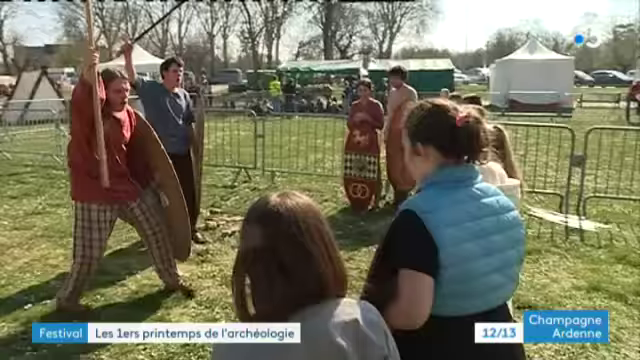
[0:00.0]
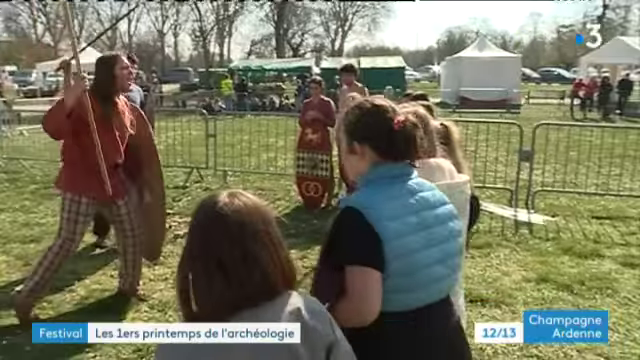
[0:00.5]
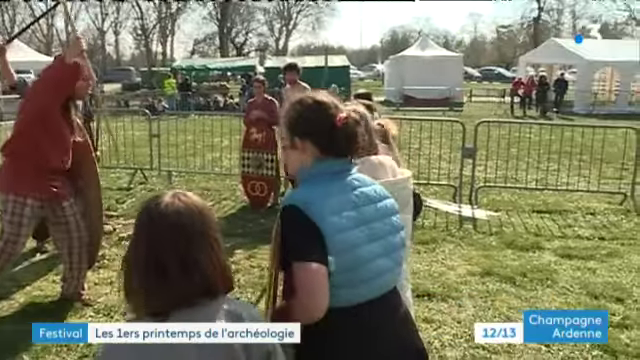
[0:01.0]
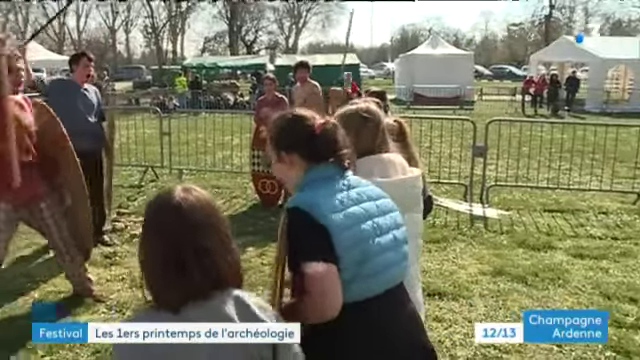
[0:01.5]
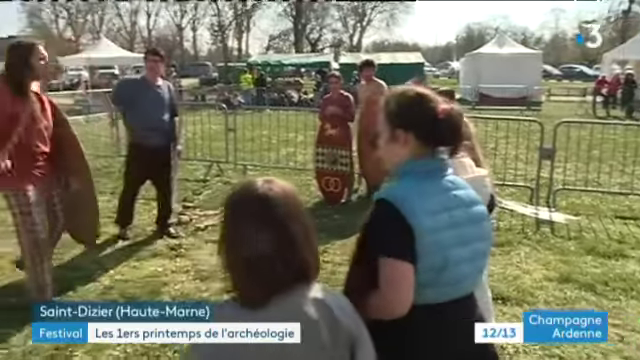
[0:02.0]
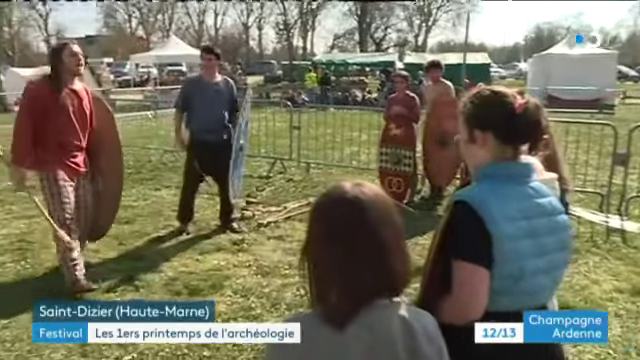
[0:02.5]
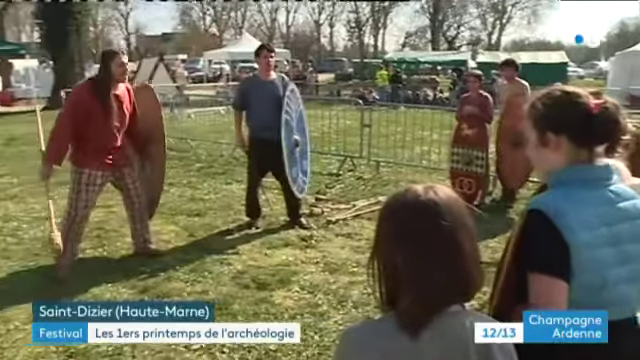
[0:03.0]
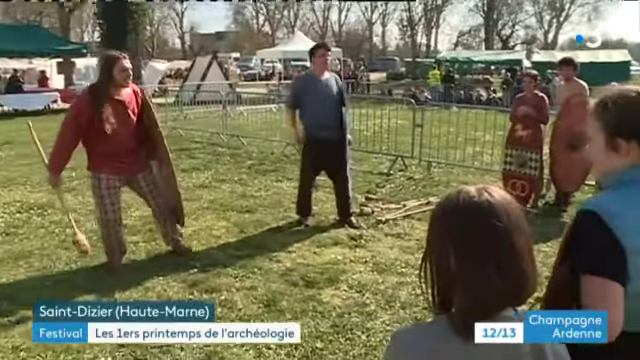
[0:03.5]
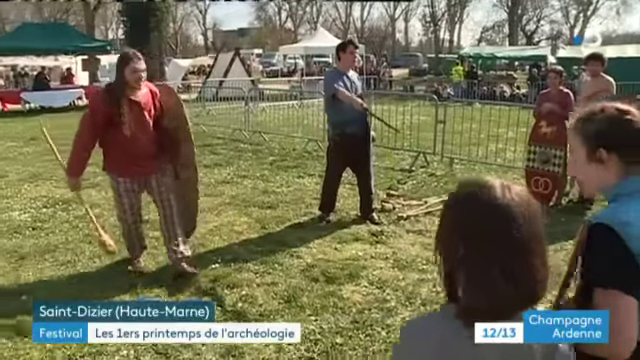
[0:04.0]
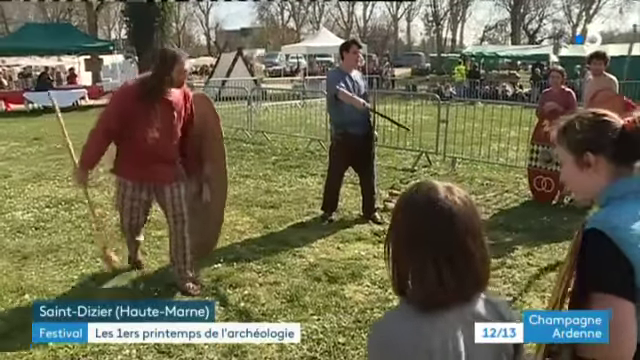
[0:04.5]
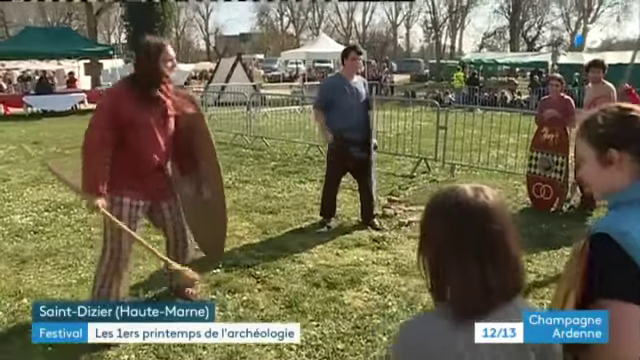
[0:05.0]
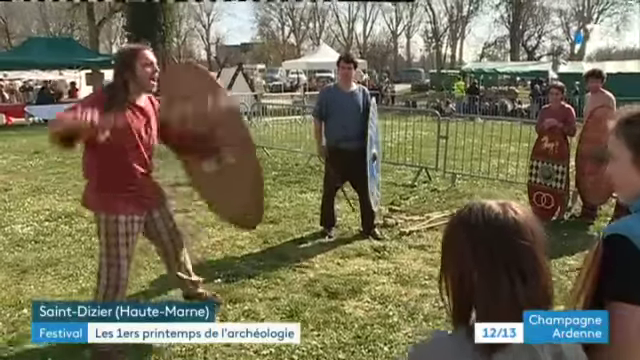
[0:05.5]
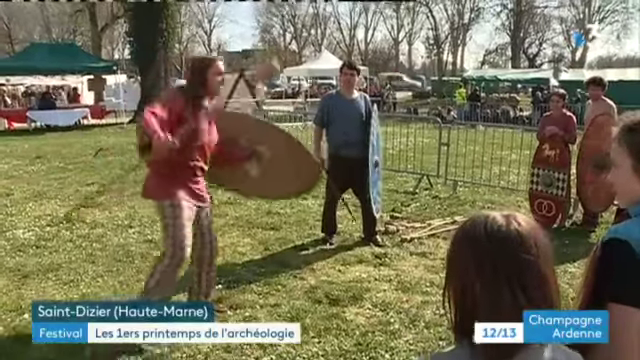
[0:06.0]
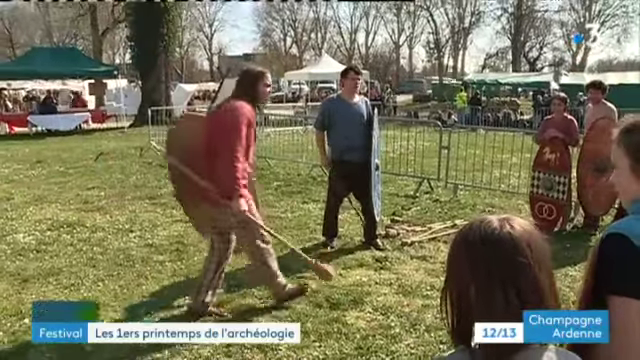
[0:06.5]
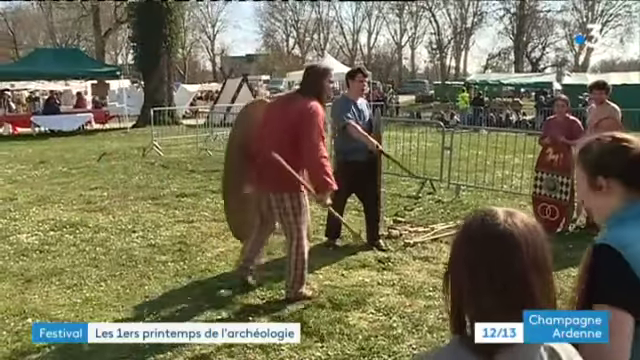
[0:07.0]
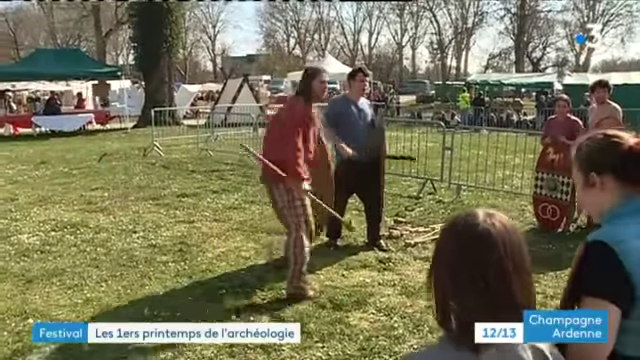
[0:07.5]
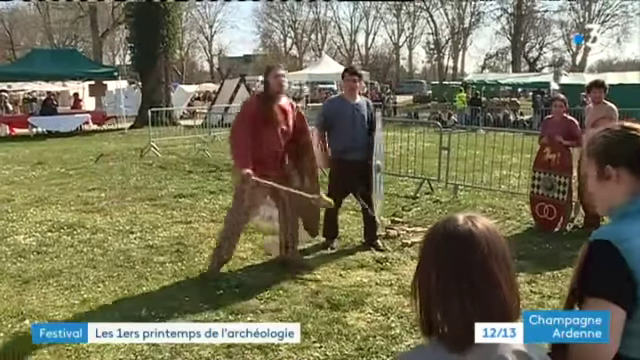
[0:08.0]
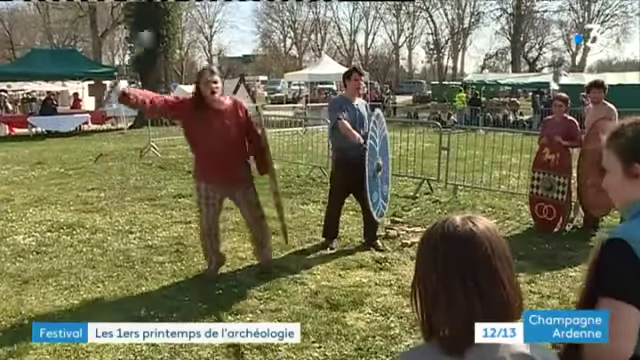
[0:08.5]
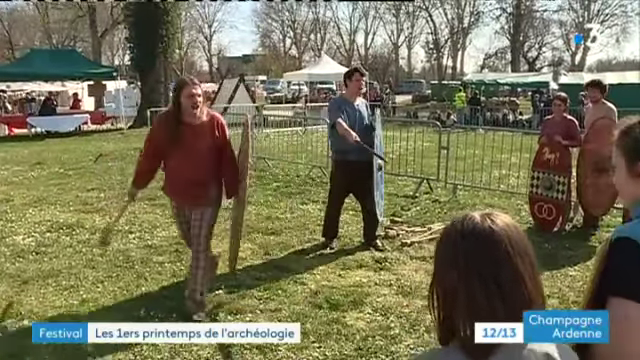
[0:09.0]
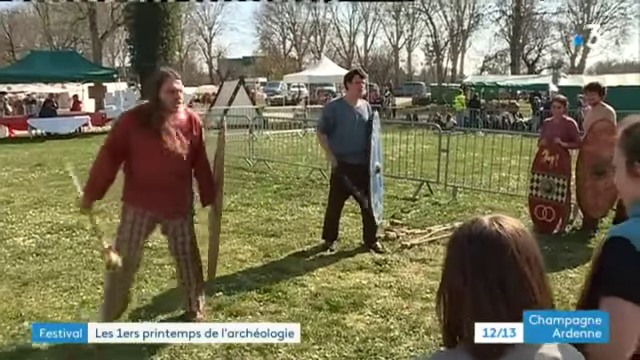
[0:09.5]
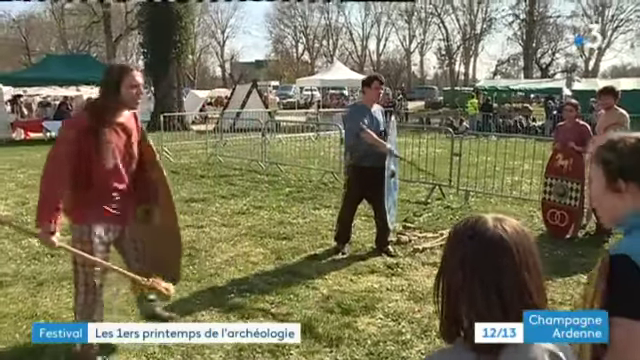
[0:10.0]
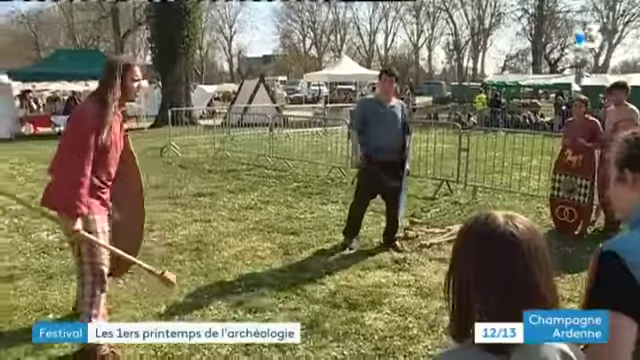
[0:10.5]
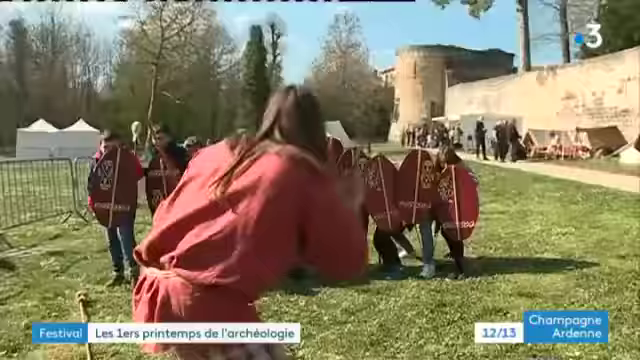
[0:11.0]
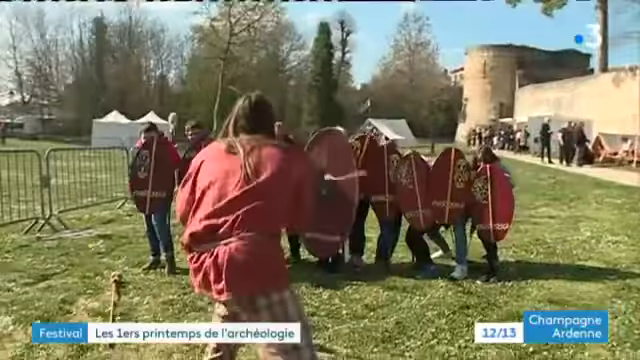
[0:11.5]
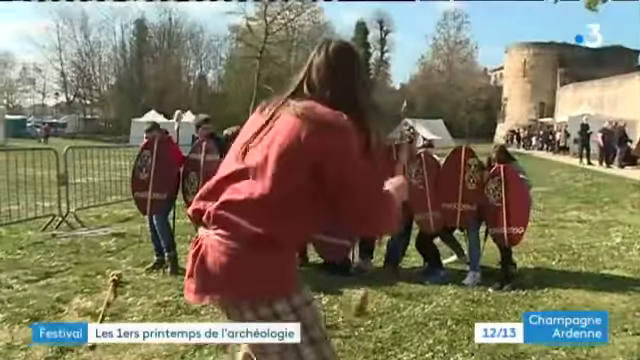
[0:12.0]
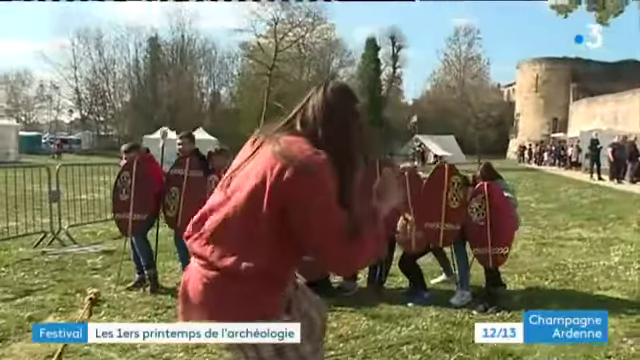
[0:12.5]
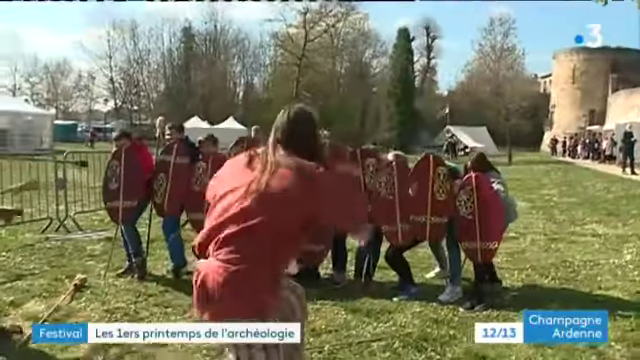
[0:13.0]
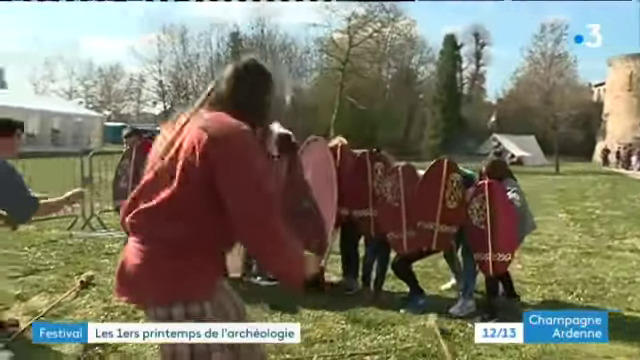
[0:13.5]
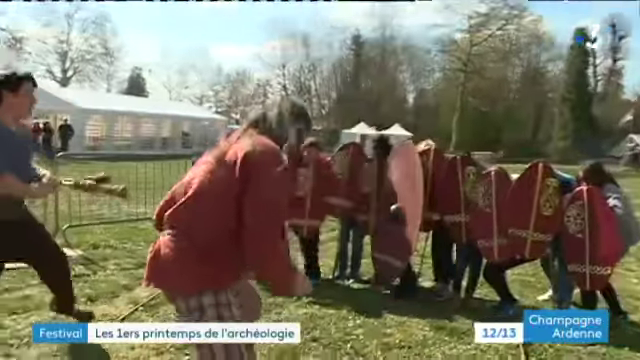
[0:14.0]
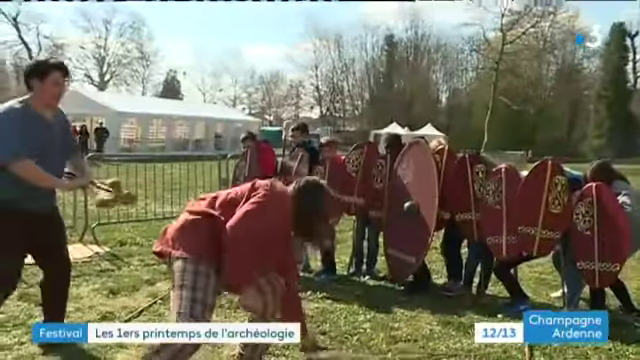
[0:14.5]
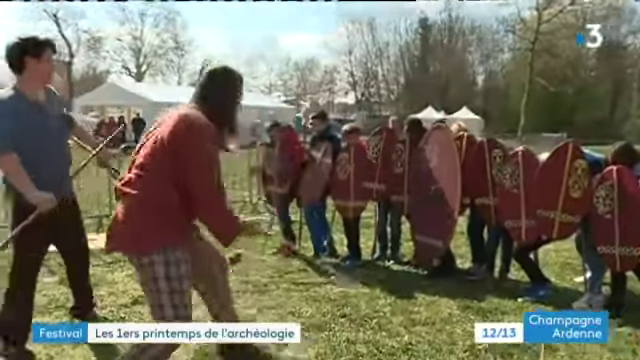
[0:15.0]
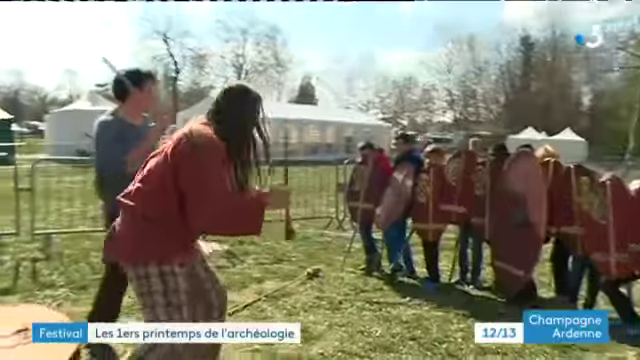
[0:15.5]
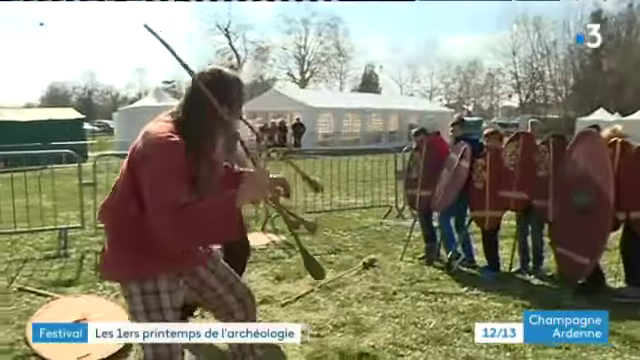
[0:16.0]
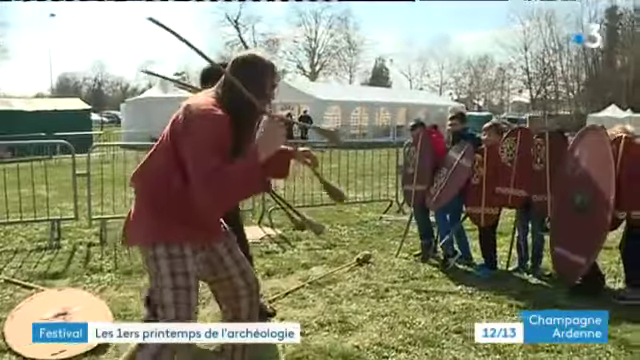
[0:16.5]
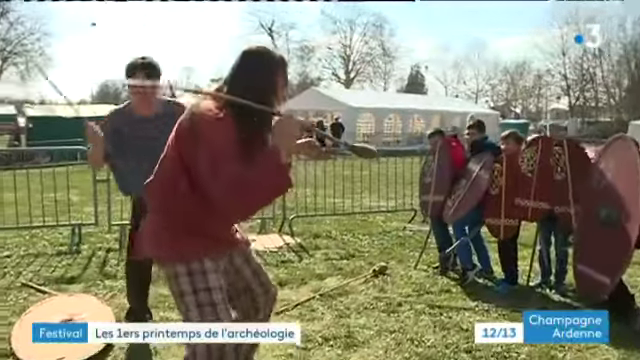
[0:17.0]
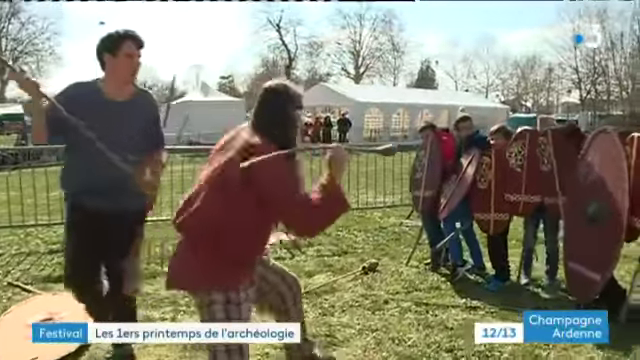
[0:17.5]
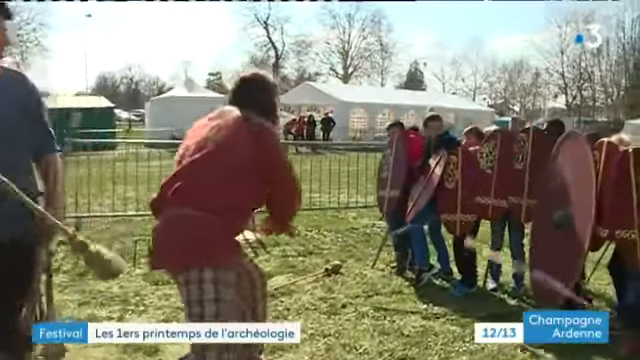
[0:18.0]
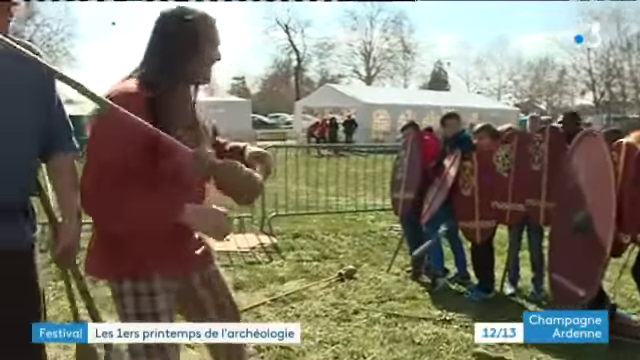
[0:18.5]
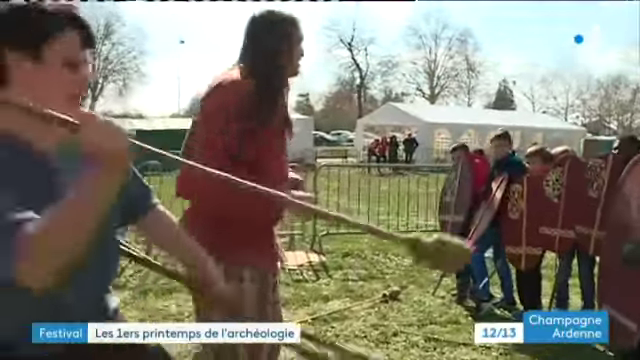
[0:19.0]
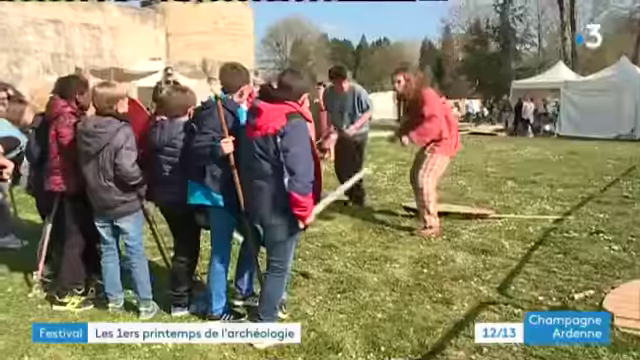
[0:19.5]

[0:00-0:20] What looks like a historical reenactment is filmed outdoors on a flat green lawn on a sunny day, with trees and several marquees in the background. In the foreground, two men stand at the left of the screen, a man and a woman are at the back, and three girls are on the right. The girls watch the two men, who hold large round shields and spears. The men raise their spears in the sky in a warlike manner while shouting something at the girls, who seem to be participating in the reenactment and shout something in response. The man in the red shirt lifts his shield and spear and shouts at the girls while the man in the blue shirt stands by and watches. The angle of the shot then changes, and part of what looks like a medieval castle is visible on the right of the screen, with people milling around it. In the foreground is a row of about 12 children holding red oval shields. On the left, the man in the red shirt hurls something at the children, who deflect the weapons with their shields. The man in the blue t-shirt then comes to the front of the screen and also throws things at the children. In the lower right of the screen, a blue rectangular box says "Champagne Ardenne".